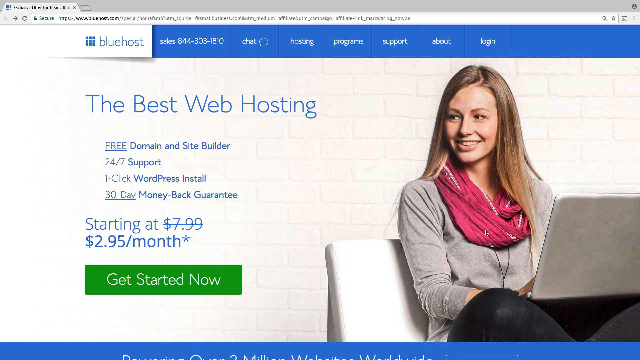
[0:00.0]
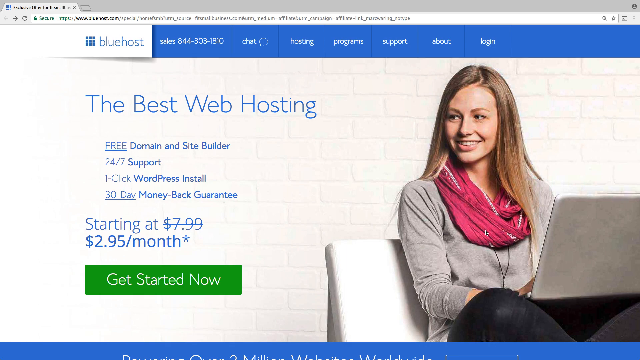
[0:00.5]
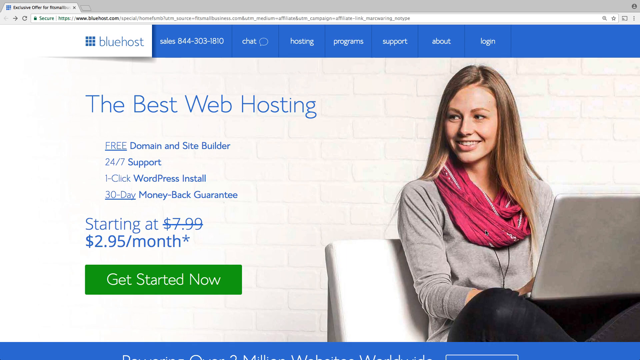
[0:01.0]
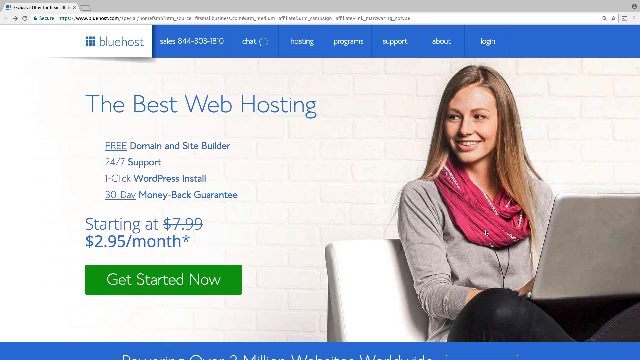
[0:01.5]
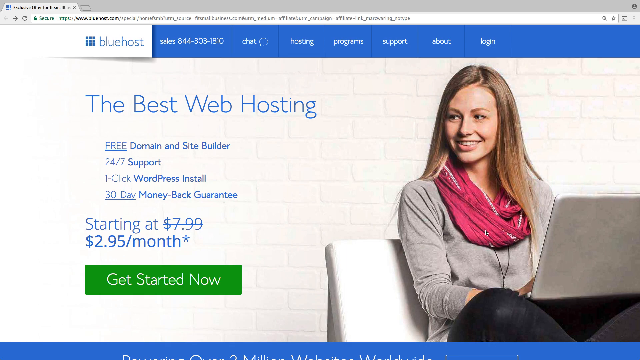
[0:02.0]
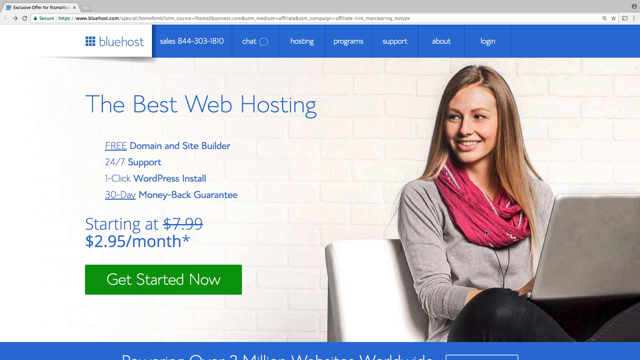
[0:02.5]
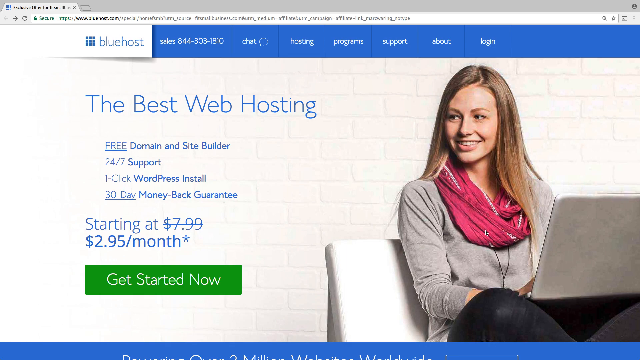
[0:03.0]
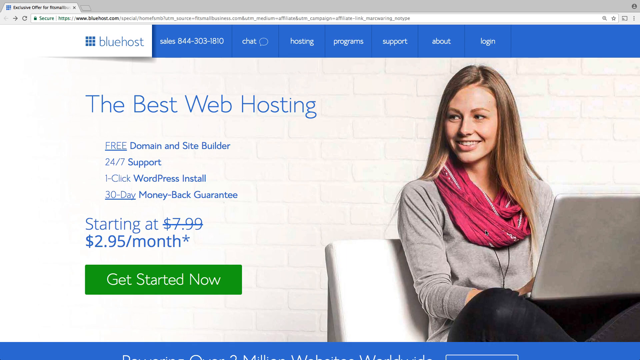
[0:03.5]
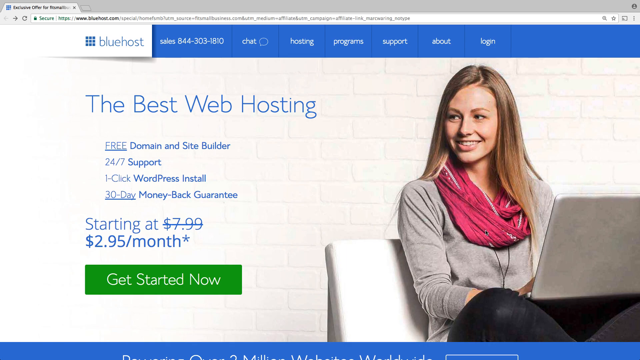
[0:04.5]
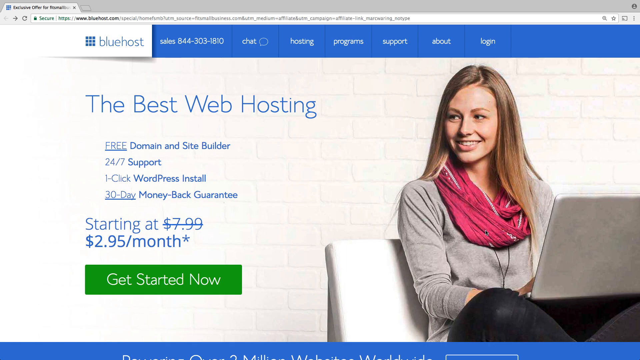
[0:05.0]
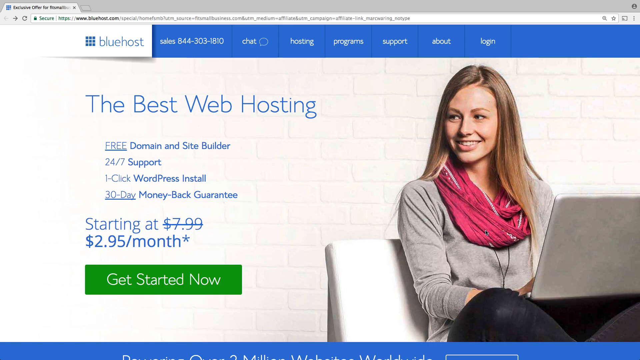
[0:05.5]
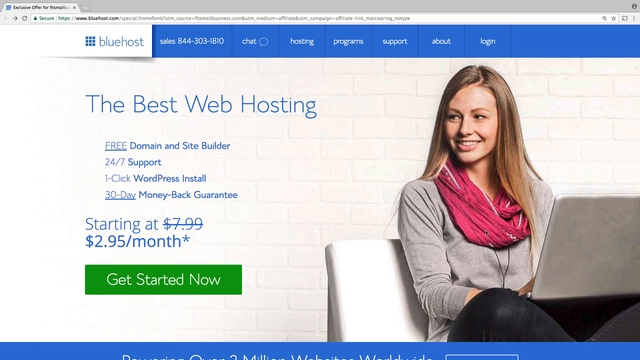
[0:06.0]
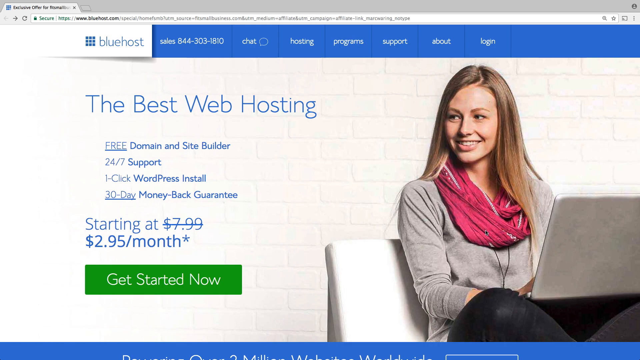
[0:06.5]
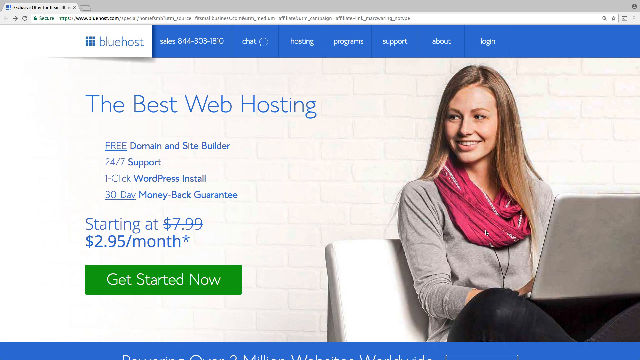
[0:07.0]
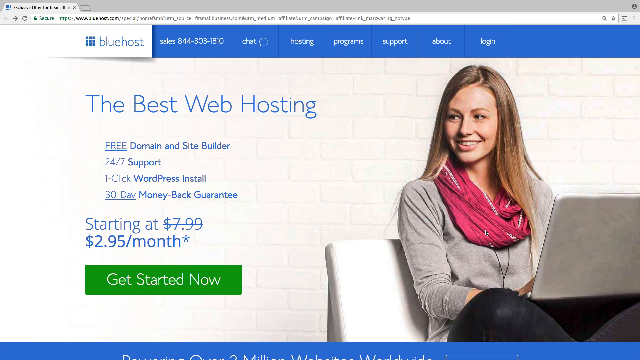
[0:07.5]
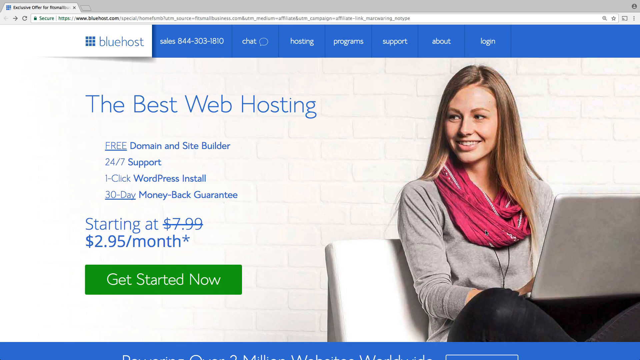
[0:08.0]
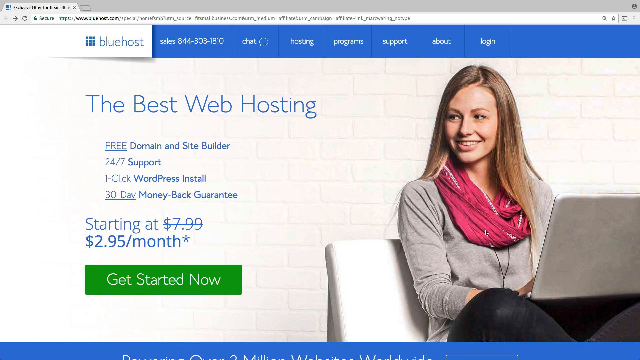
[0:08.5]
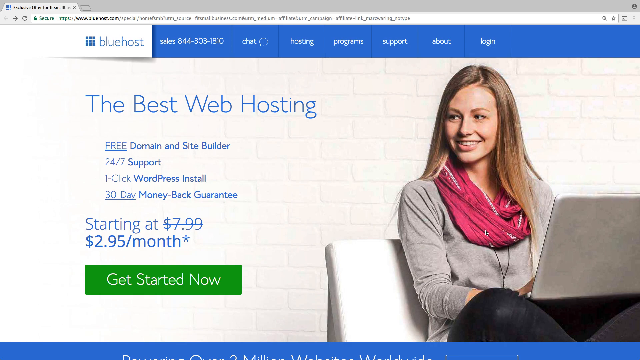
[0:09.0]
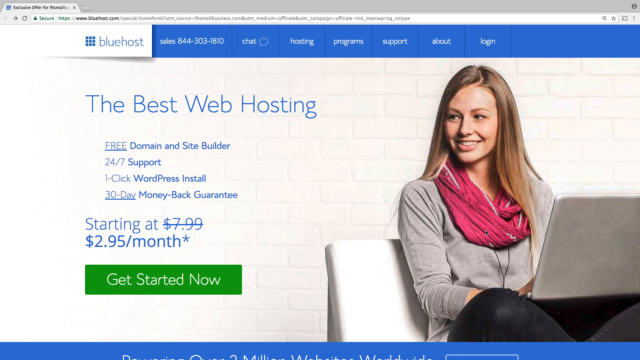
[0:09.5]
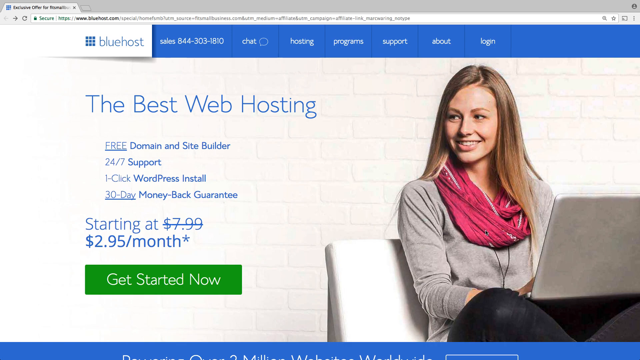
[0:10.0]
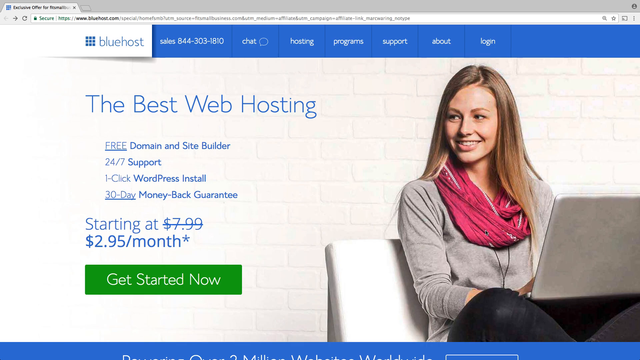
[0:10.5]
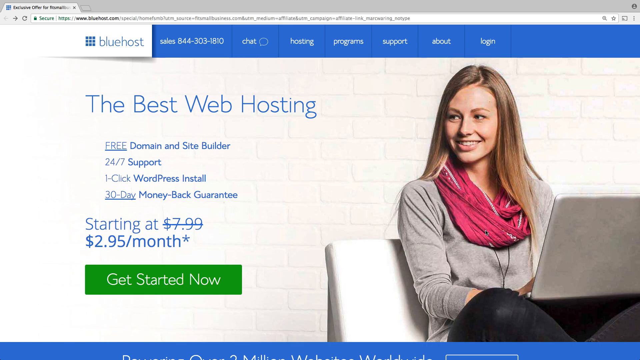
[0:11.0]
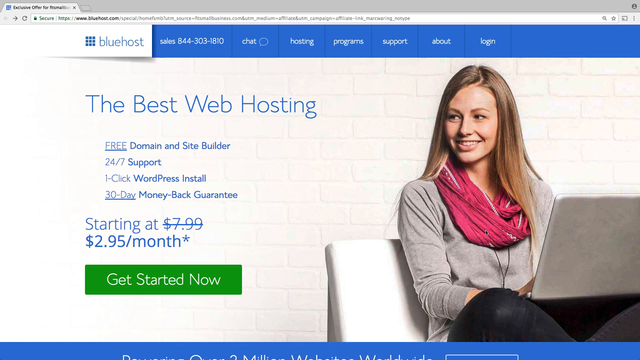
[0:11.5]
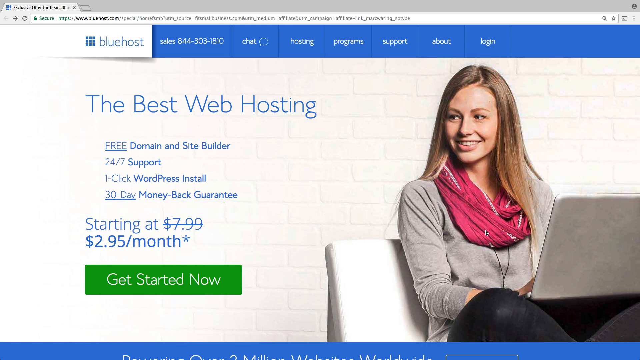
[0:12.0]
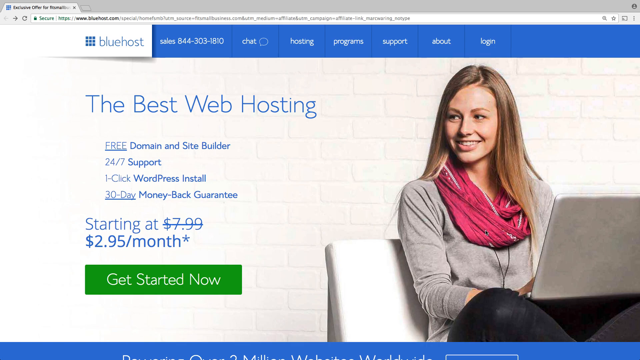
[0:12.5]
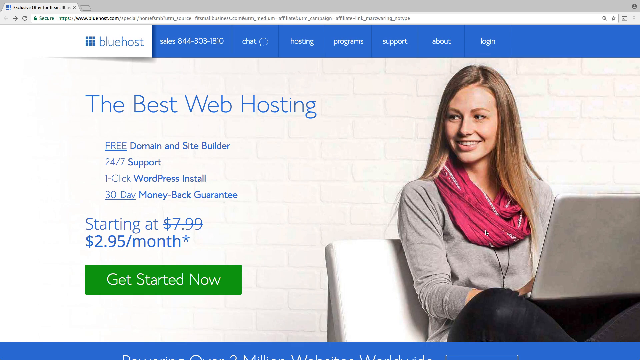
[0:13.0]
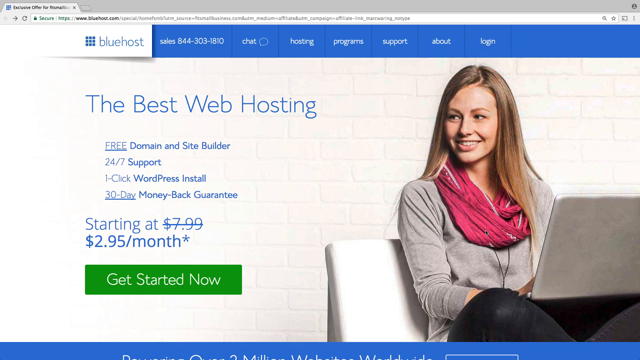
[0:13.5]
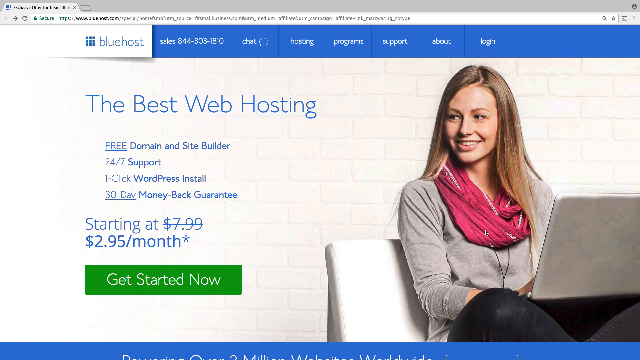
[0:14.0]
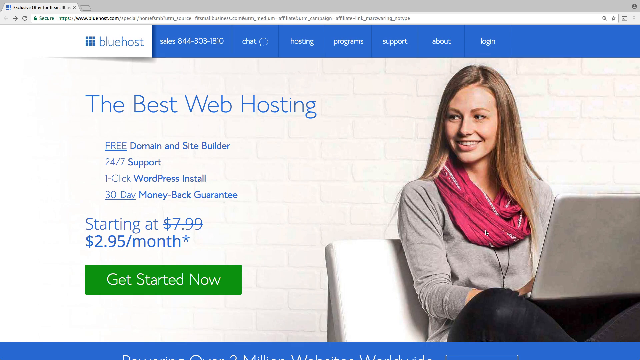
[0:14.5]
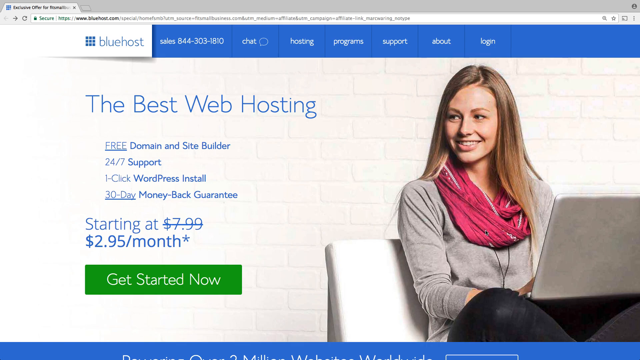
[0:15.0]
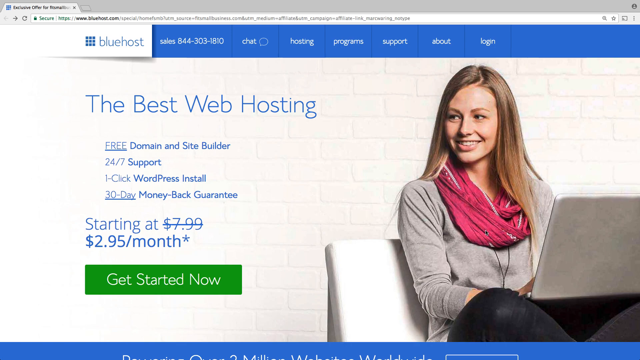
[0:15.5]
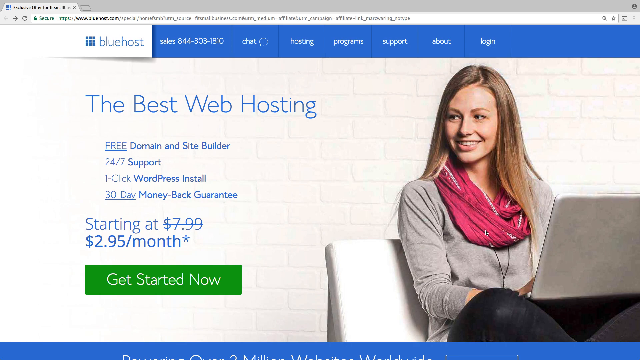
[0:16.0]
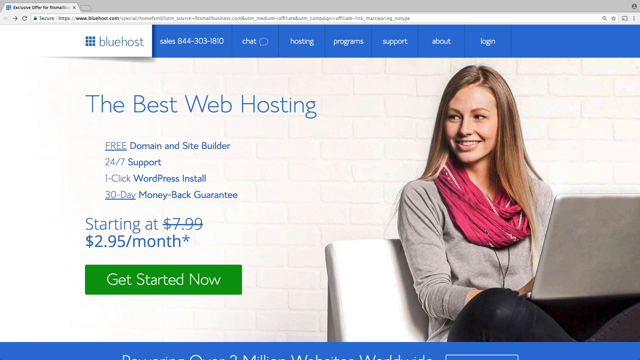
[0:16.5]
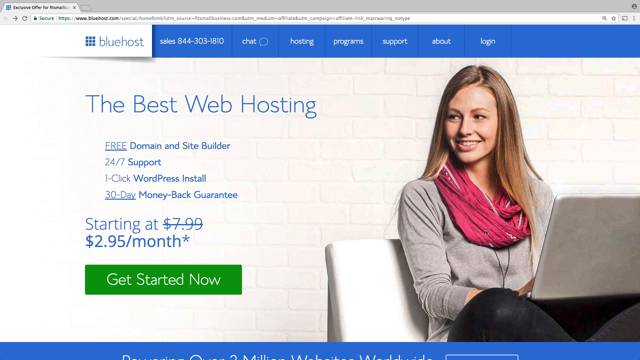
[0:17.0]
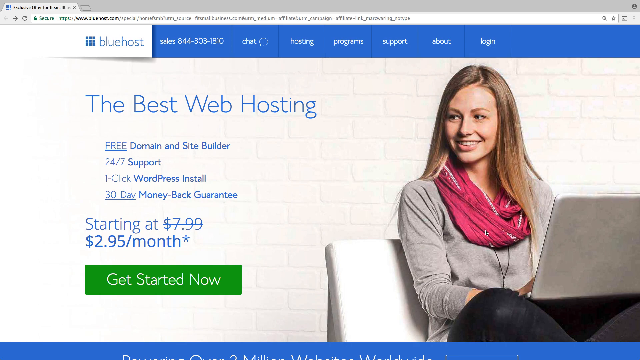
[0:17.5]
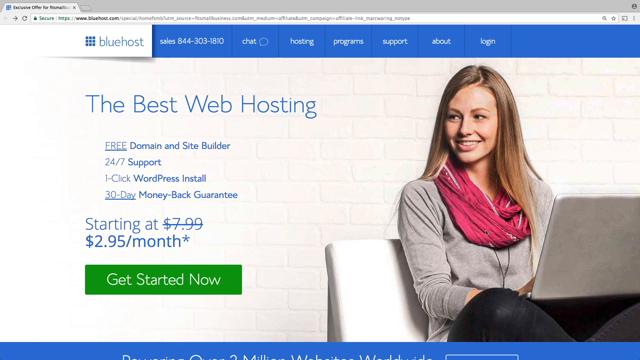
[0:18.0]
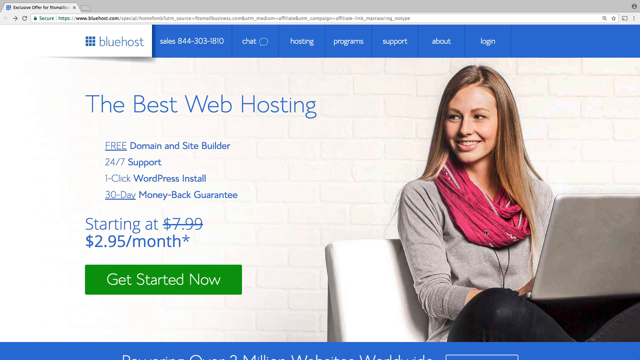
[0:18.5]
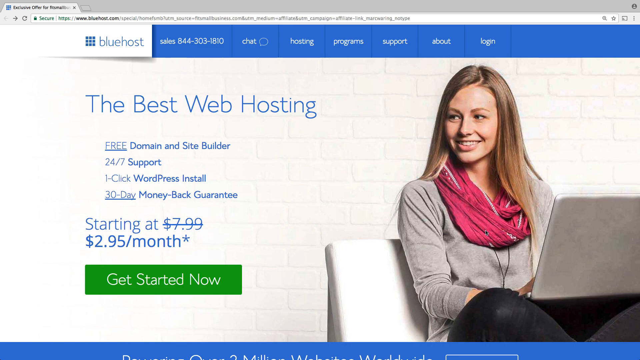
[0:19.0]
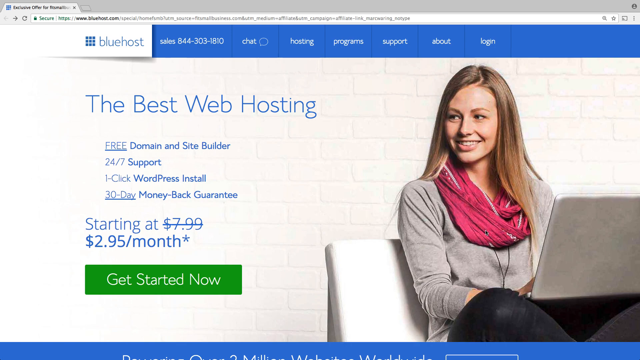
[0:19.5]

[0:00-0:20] The video shows a web hosting site called Bluehost, with a white background and blue borders, offering a domain each month for about $3 along with a WordPress install. A girl sits on a white couch in front of a laptop. She wears a gray sweater, a scarf that is pink or lavender, and black-green pants, and has long brown hair and hazel eyes. She seems to be staring off to her right, possibly smiling, as if something there is making her happy or is funny. It is an advertisement.